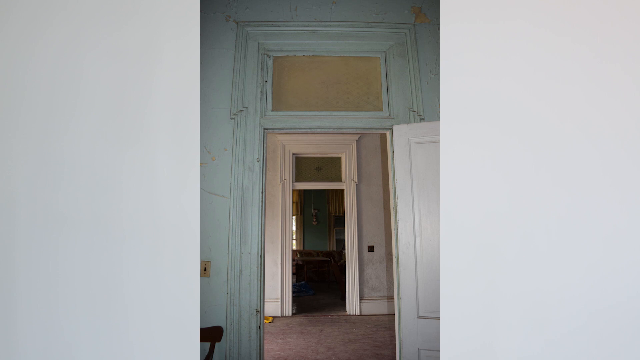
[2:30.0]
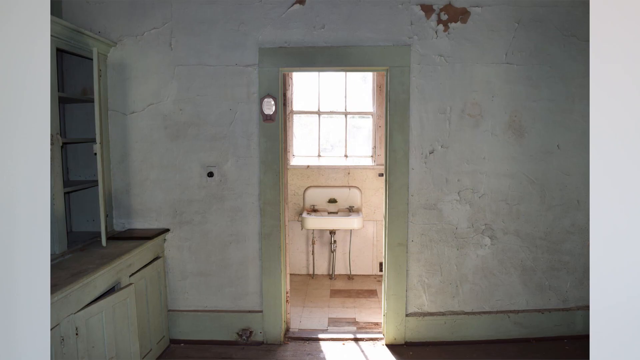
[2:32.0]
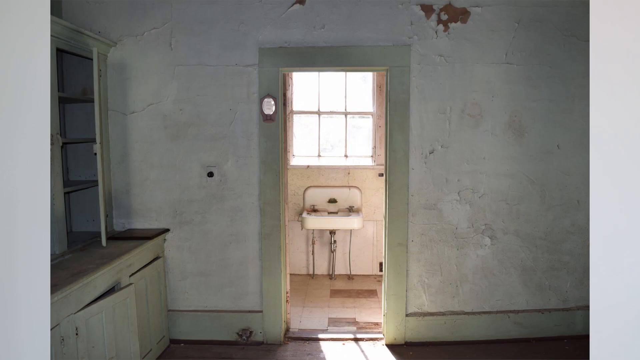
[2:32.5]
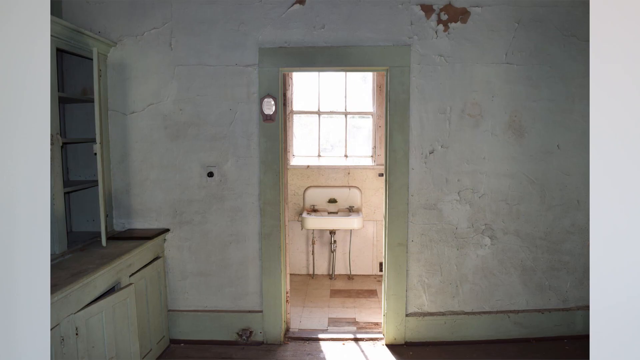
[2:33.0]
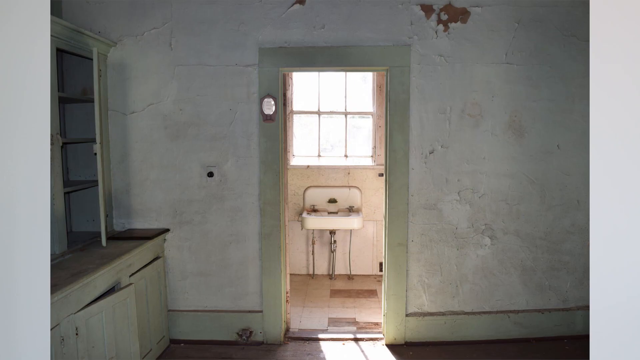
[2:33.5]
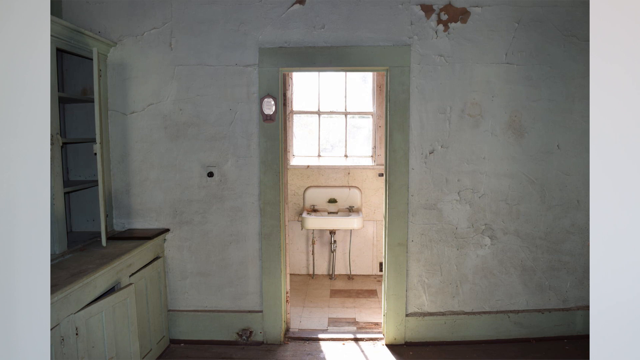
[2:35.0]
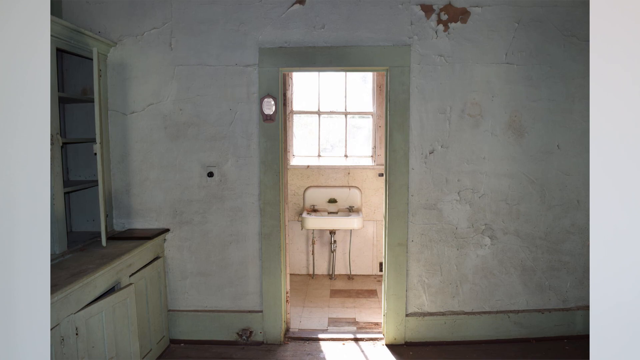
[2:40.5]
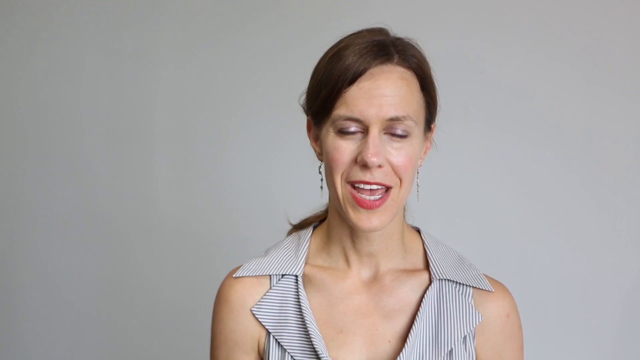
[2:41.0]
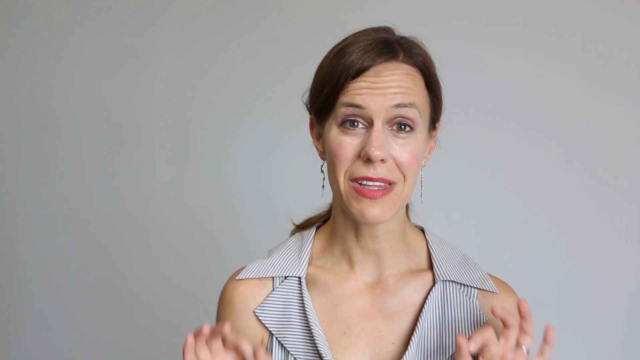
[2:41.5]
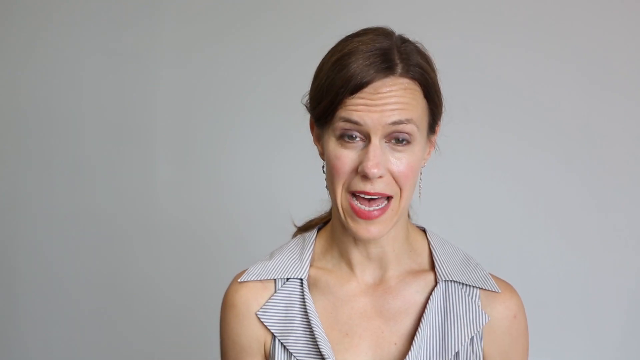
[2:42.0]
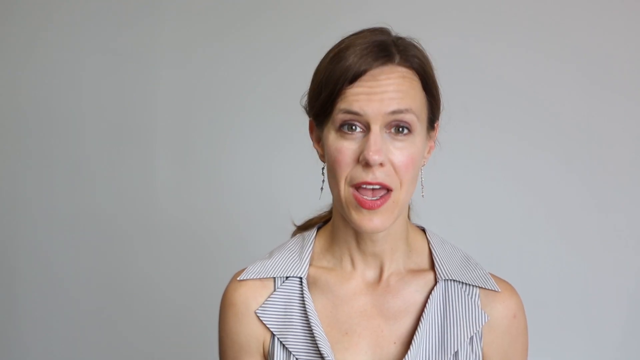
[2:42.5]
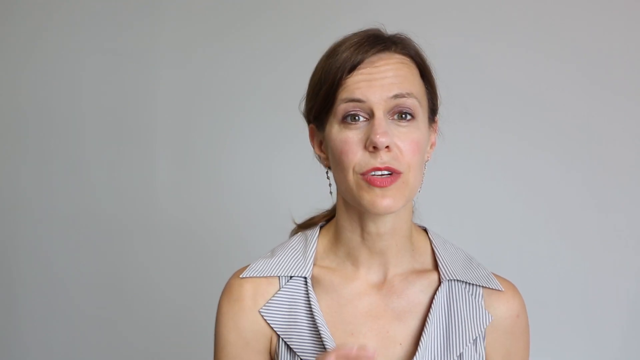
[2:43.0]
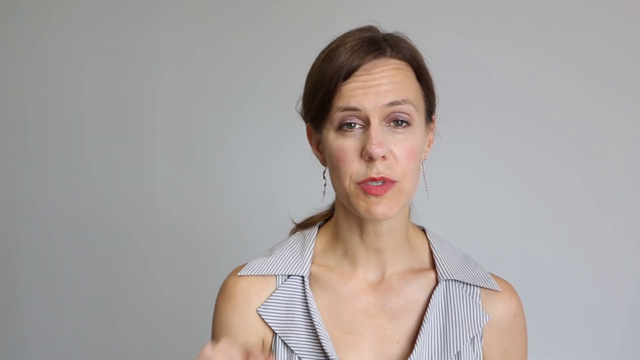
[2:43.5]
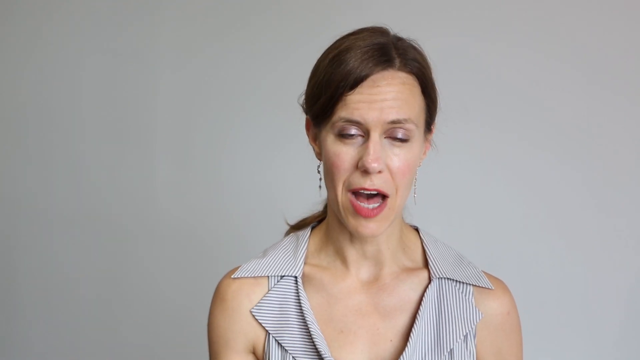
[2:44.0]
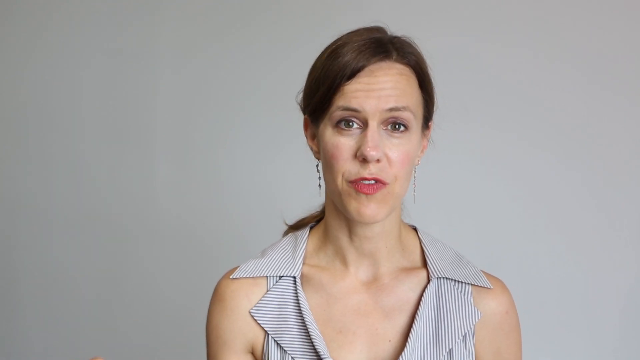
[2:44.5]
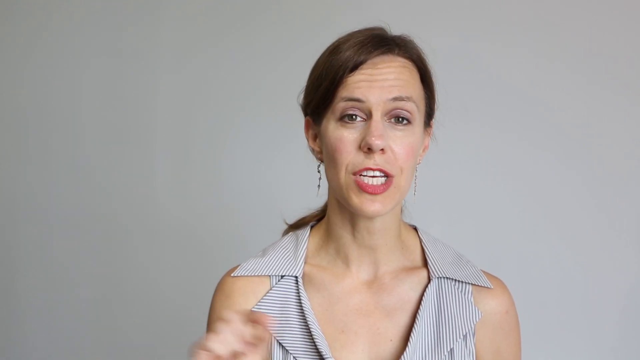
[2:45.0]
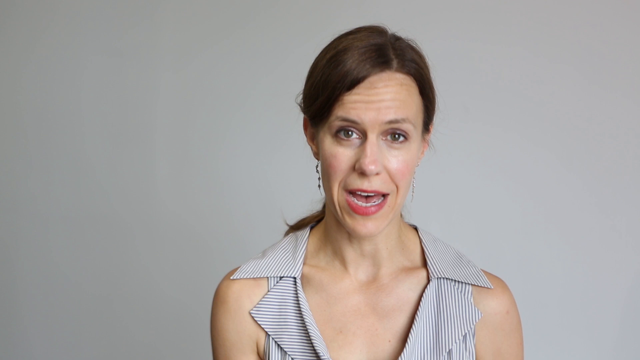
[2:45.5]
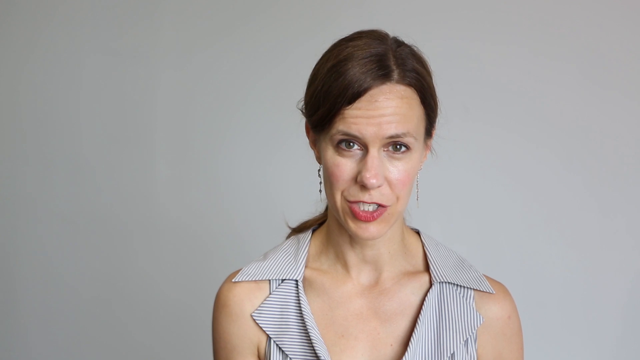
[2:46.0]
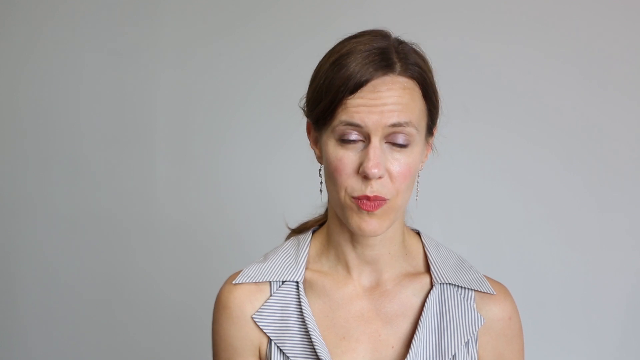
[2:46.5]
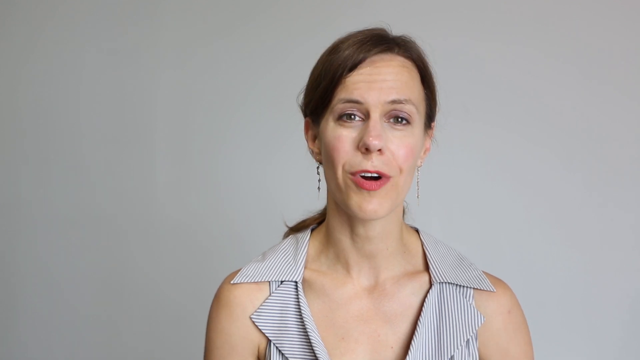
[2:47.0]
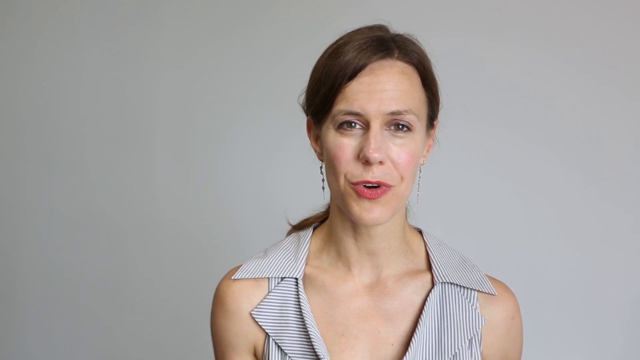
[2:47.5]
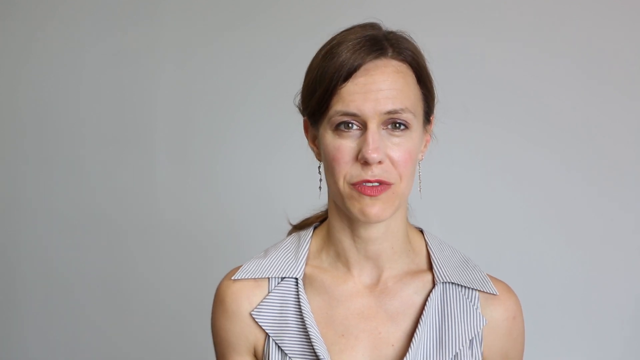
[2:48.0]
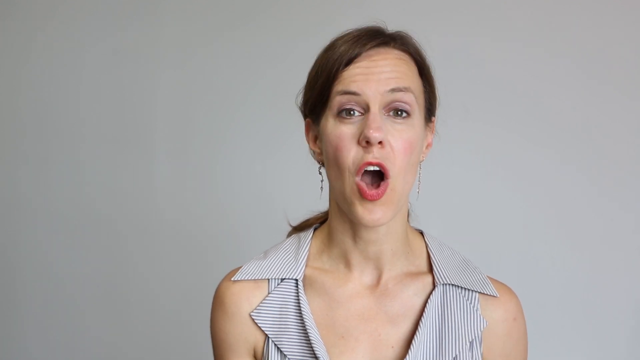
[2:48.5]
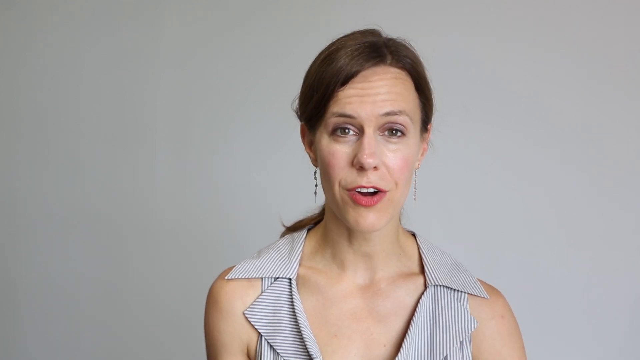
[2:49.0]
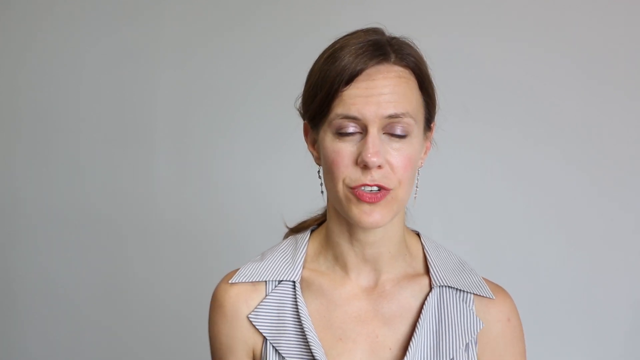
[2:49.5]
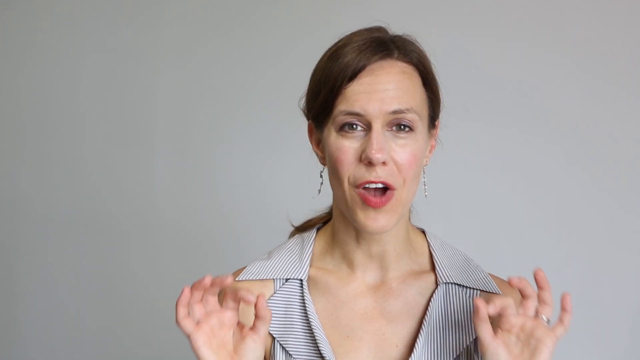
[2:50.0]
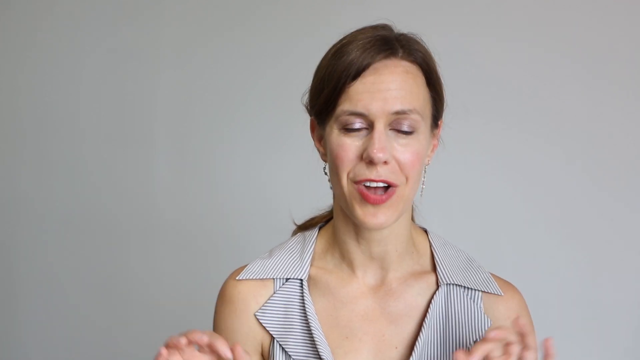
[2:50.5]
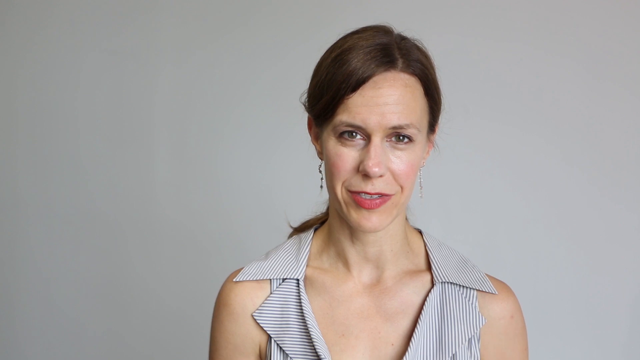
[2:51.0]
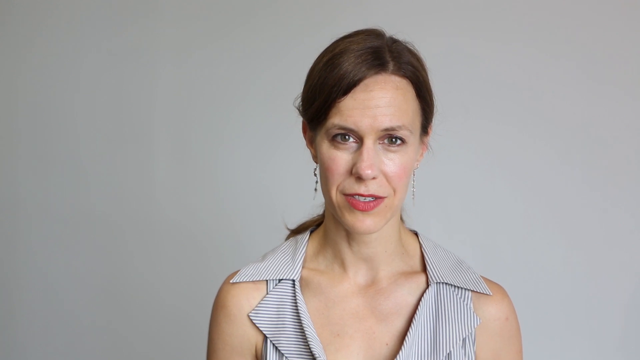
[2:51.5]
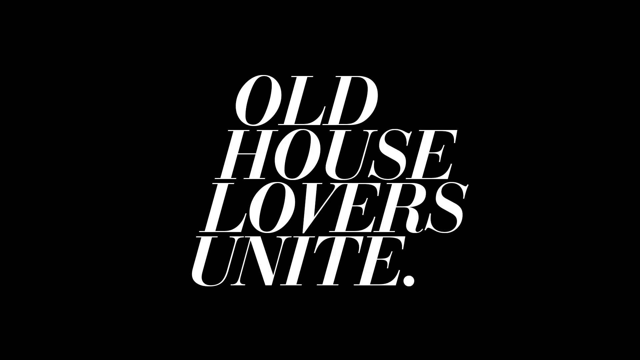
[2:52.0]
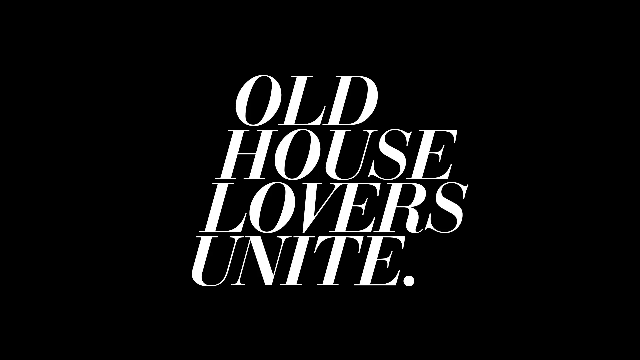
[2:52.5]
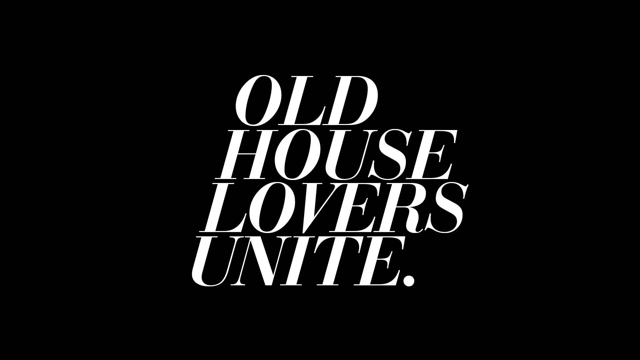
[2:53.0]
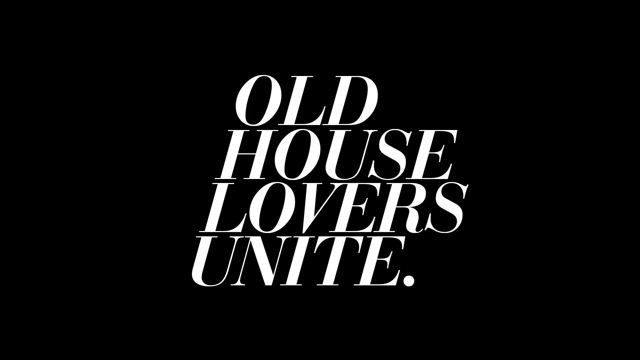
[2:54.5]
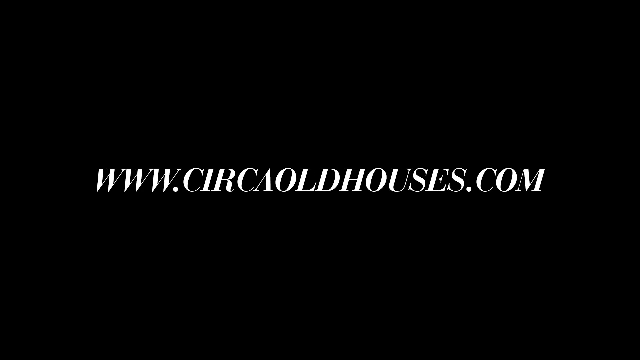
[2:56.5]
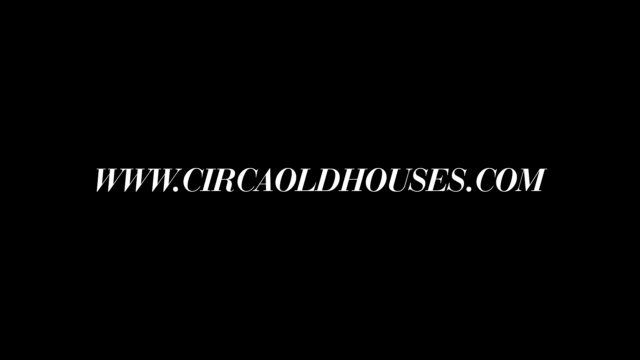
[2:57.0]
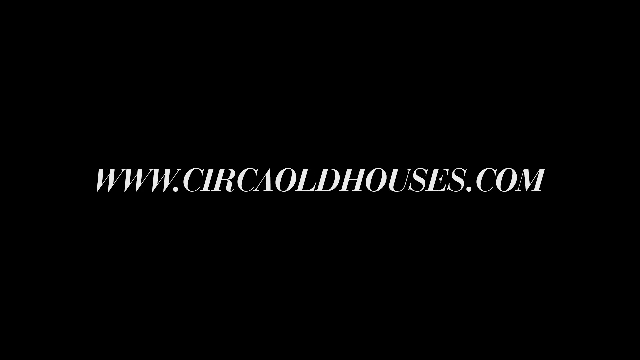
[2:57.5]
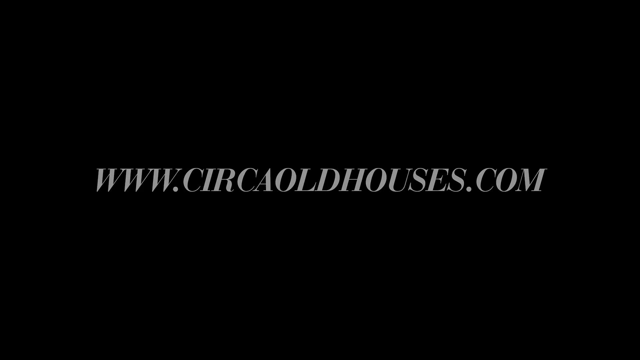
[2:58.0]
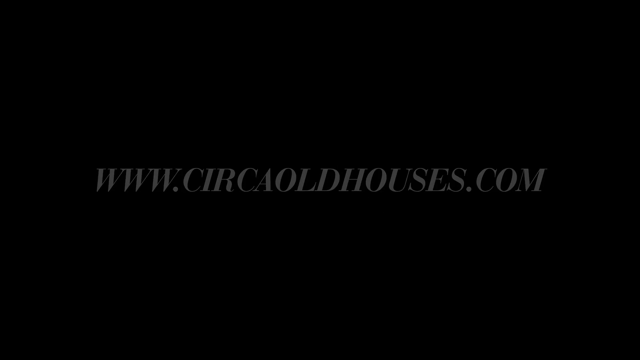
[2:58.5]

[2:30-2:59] An image shows a doorway in faded, very light blue walls. A large white door is open, and a window panel above the door looks filled in with cardboard. Through the doorway is a hallway, and across it another room with brown leather sofas and dark green walls with windows that have dark orange curtains. Next is another room with light green cabinets to the left and a doorway in the middle whose frame is light green while the rest of the wall is white. Through the doorway is a small room with a small white sink directly in the middle of the doorway and a large window above it. The scene then changes to a woman with brown hair tied in a low ponytail at the back of her neck and tucked behind her ears in front. She starts speaking to the camera and quickly raises both hands, making OK symbols with her index fingers and thumbs, before putting her hands down and continuing to speak. She makes a quick circular motion with her right fist. She keeps speaking with a very lively, animated face and a big smile, using her hands for emphasis, though they are hard to see because she is shown only from the chest up. She makes the OK symbols again, raising both hands to her chest before putting them back down. At the end of the video, a black screen shows white text reading "old house lovers unite", with each word on a different row.